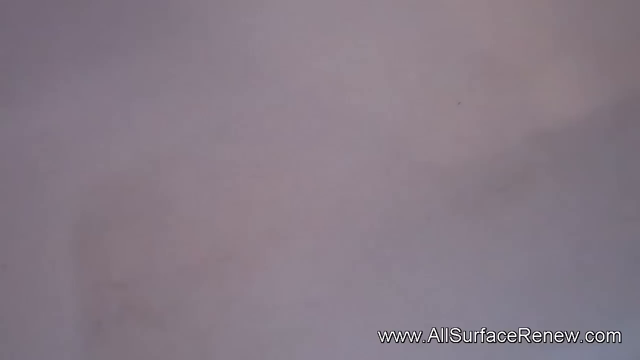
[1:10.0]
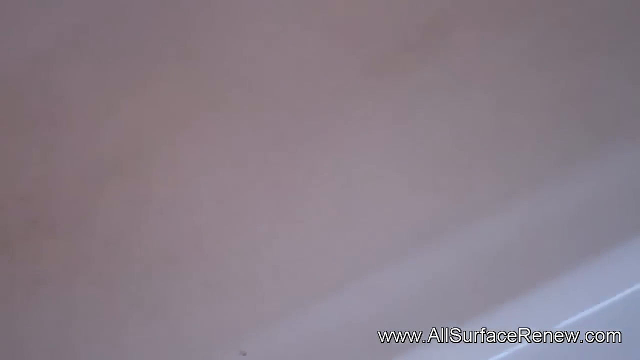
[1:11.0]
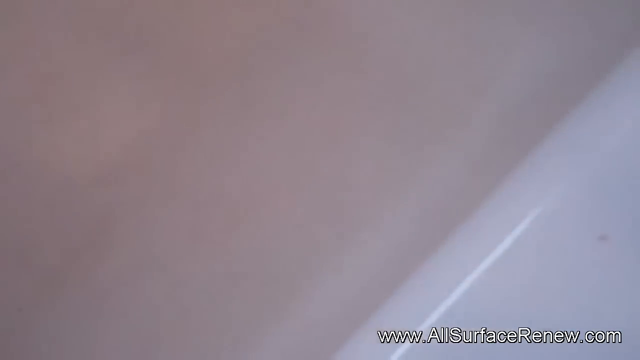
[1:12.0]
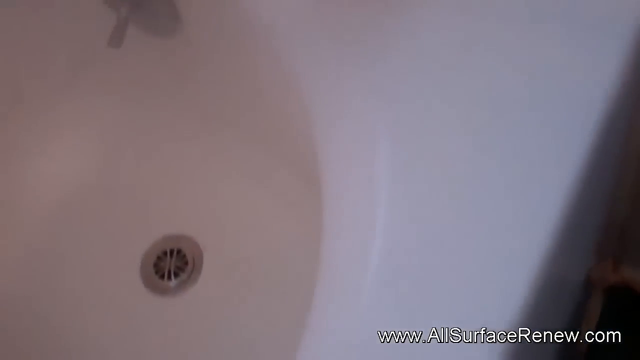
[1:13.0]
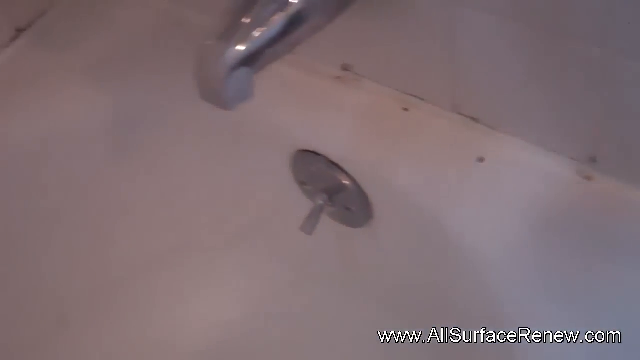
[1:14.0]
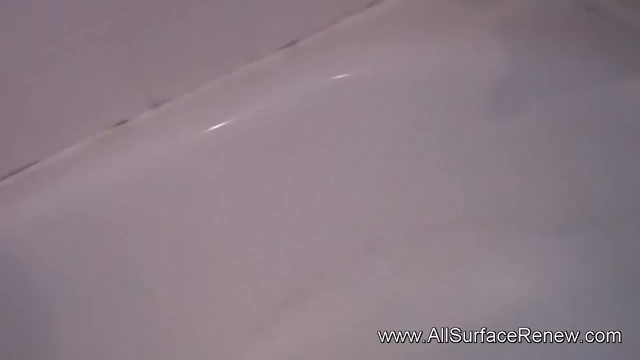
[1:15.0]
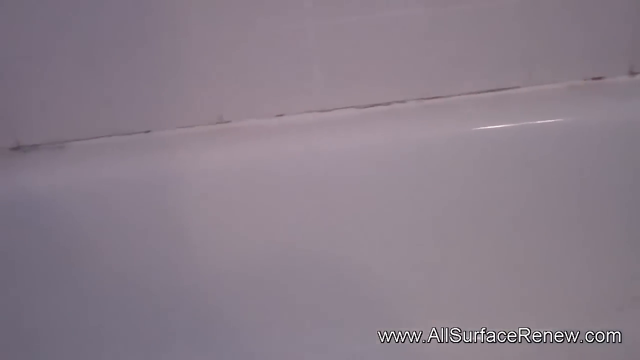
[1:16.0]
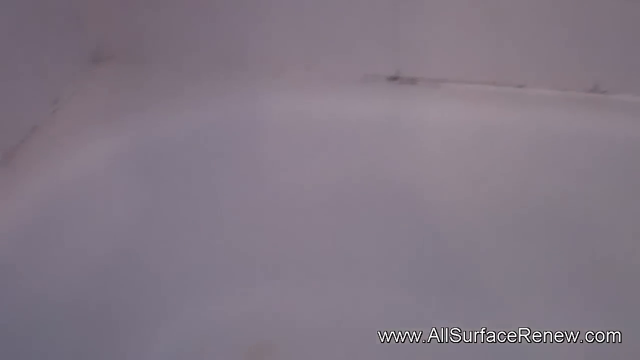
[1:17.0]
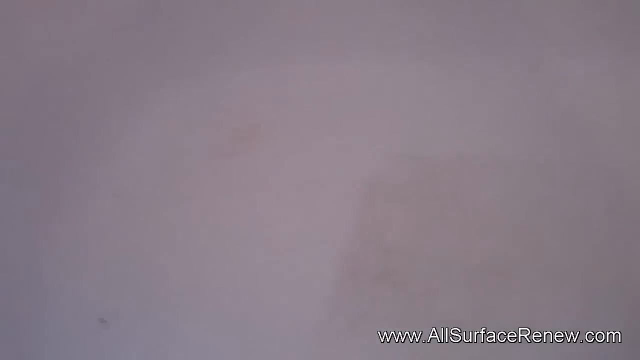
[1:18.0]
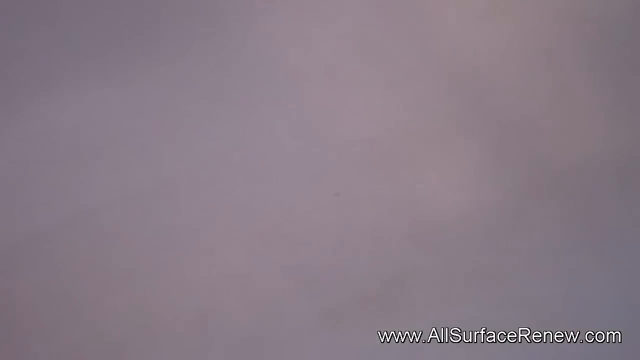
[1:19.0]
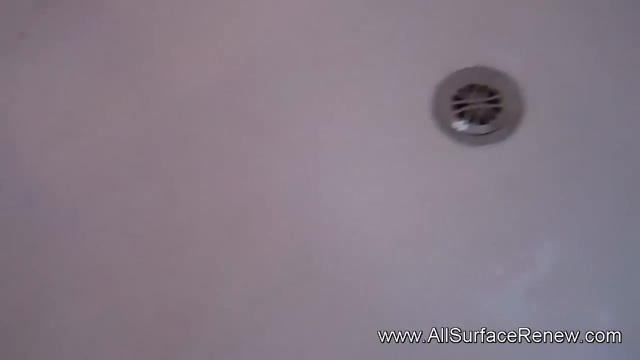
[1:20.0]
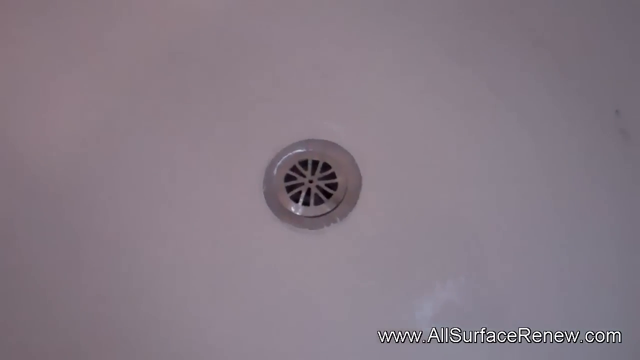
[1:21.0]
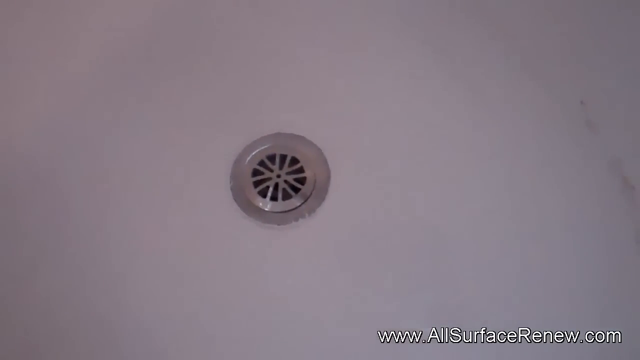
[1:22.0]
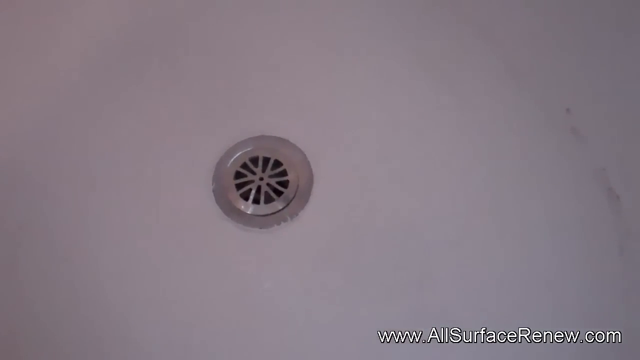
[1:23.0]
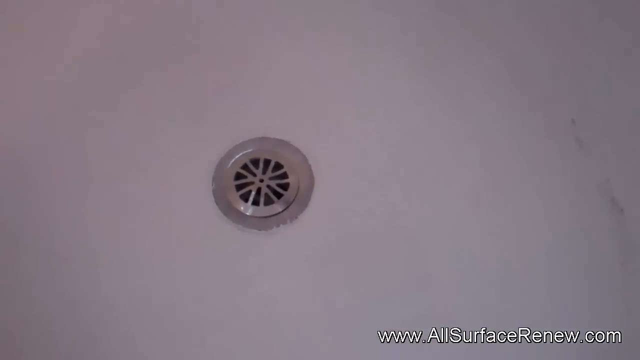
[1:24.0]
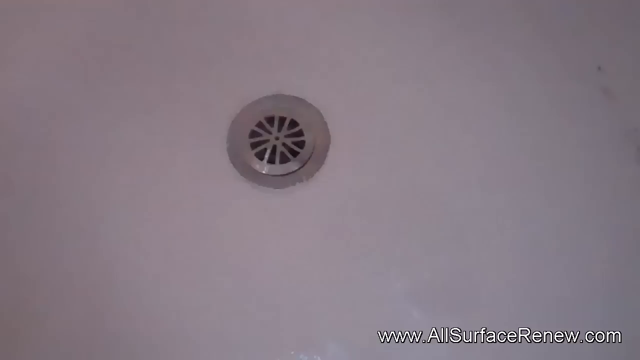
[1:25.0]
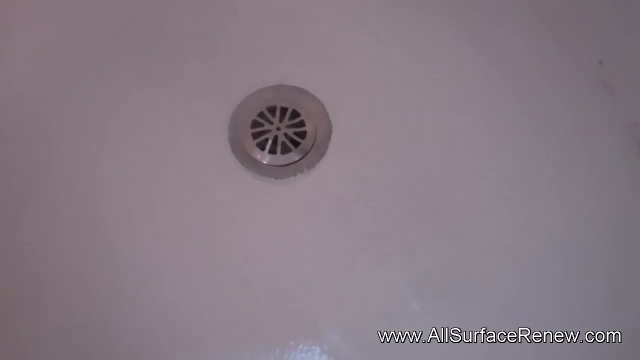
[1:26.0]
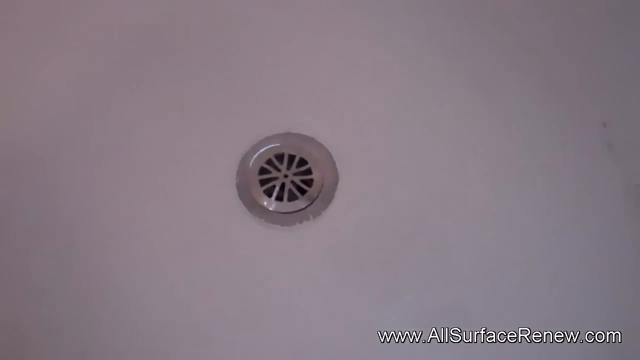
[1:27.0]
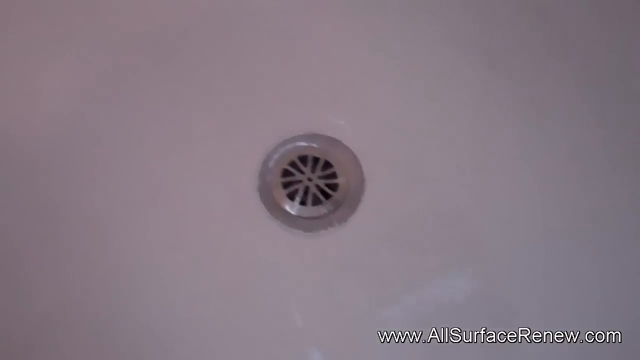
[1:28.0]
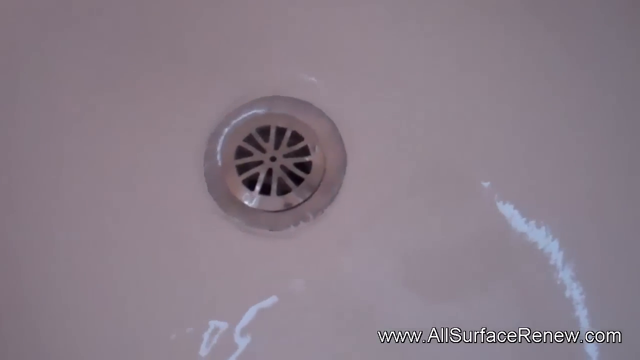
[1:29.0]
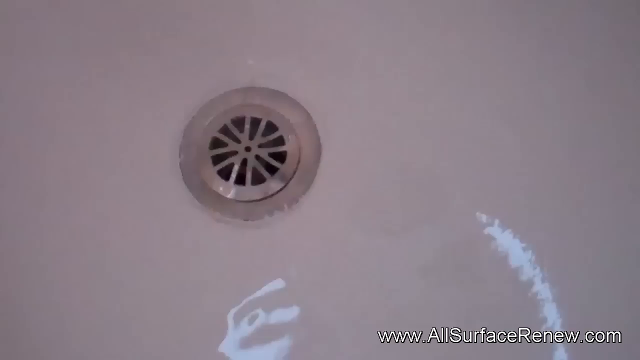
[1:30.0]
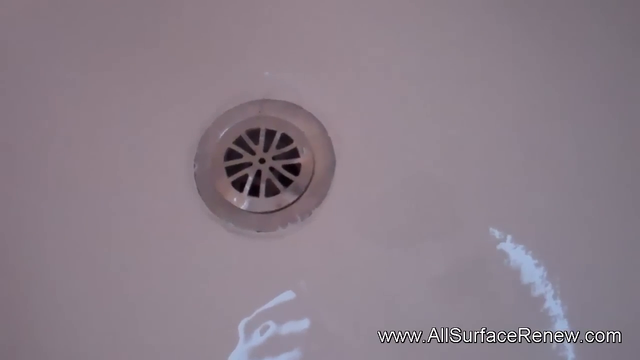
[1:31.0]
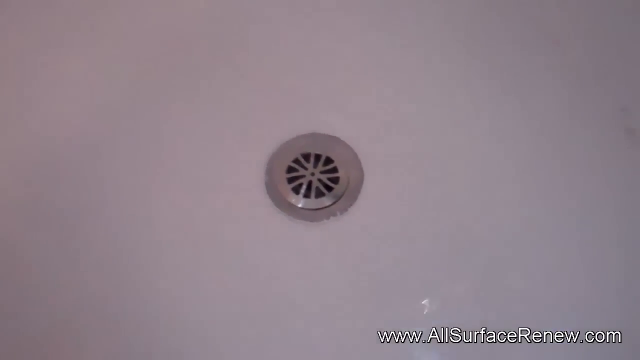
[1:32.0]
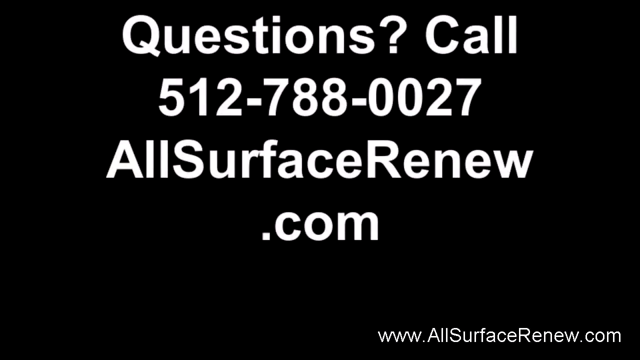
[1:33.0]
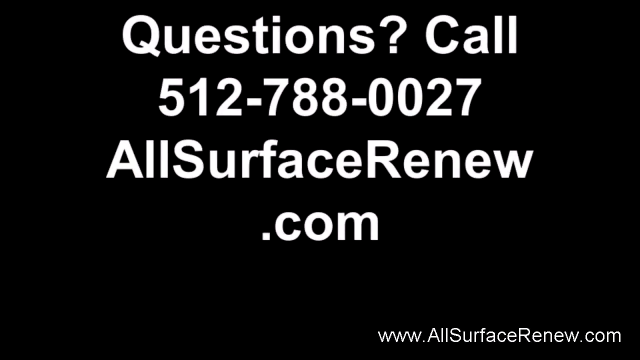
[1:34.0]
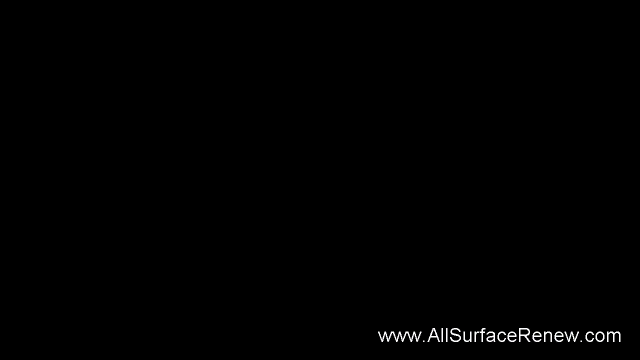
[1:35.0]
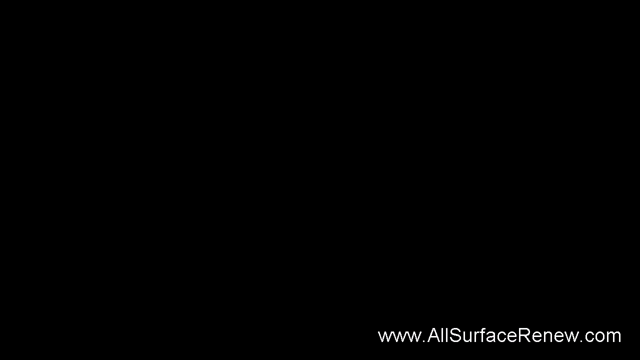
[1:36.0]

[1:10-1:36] The man pans around the outside and the inside of the tub, showing how clean it is and how much it has changed from when it was rusty; he is never seen applying any products or scrubbing anything. The rust is gone and the tub is very clean. The video then fades to black, and white text appears reading "questions? call 512 788 0027 all surface renewed.com." The video looks amateur overall, with shaky camera work.